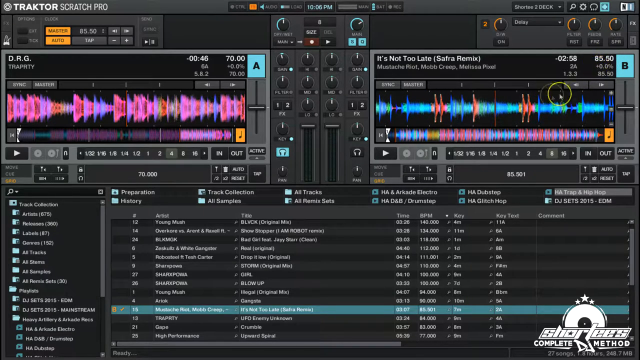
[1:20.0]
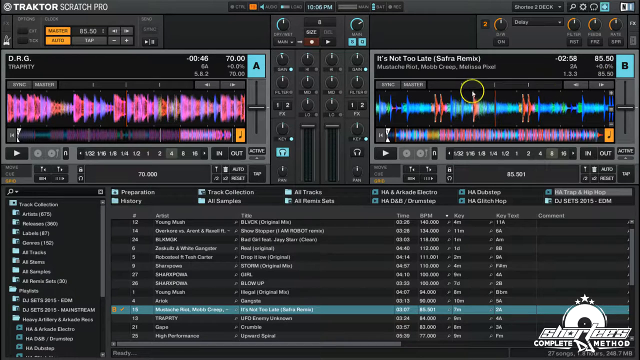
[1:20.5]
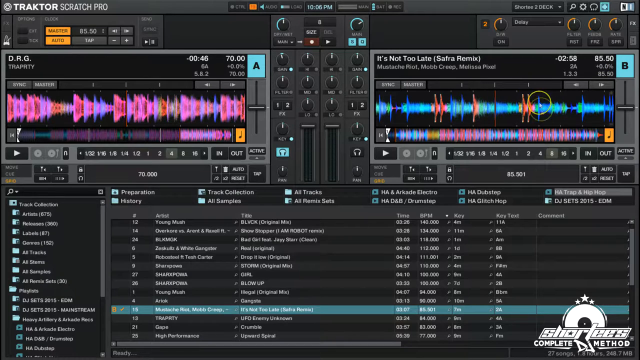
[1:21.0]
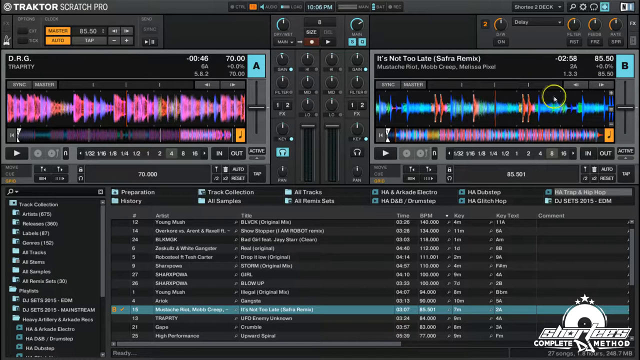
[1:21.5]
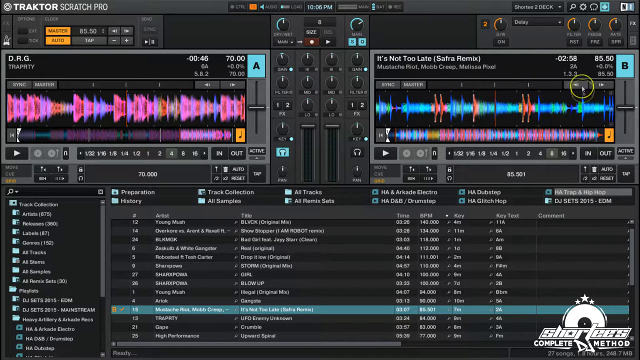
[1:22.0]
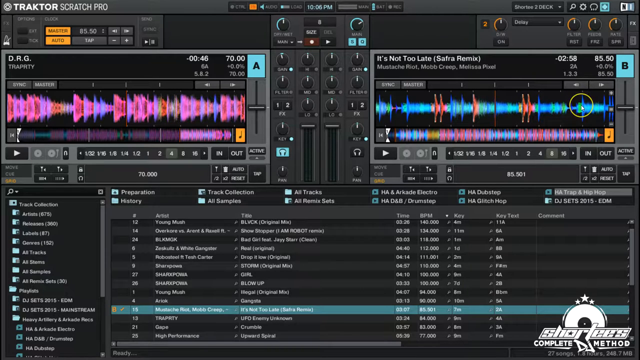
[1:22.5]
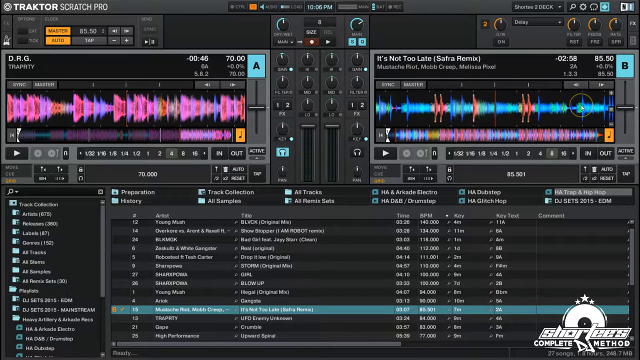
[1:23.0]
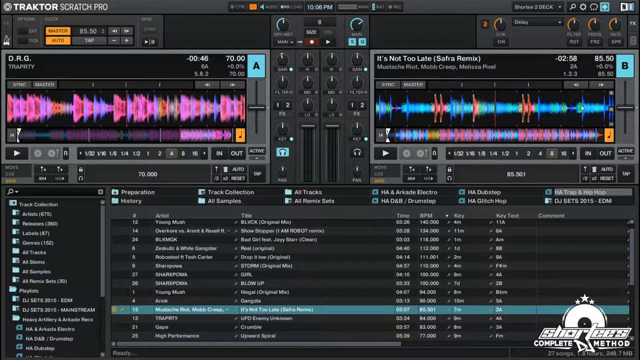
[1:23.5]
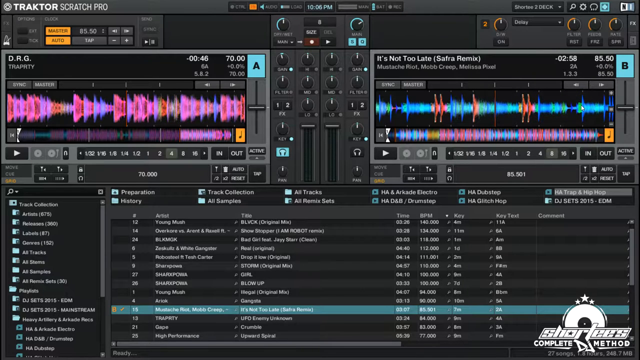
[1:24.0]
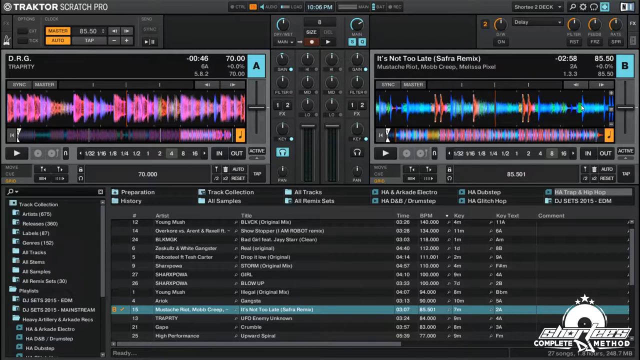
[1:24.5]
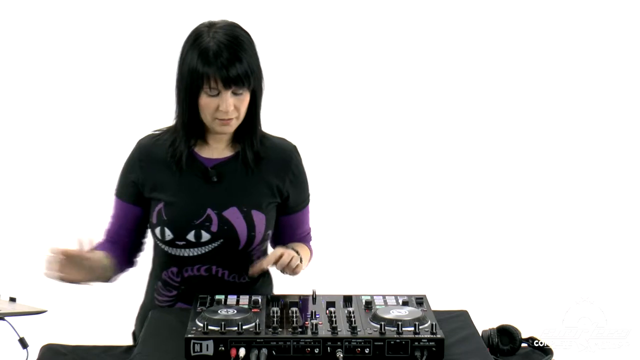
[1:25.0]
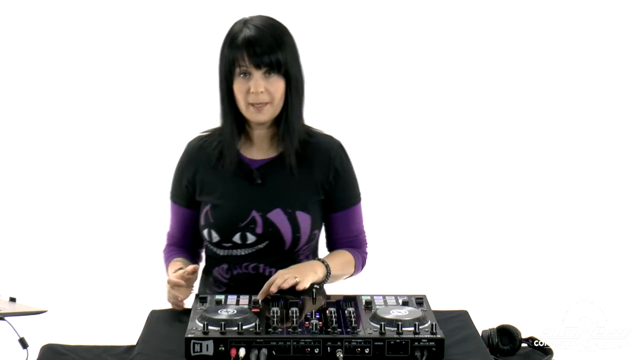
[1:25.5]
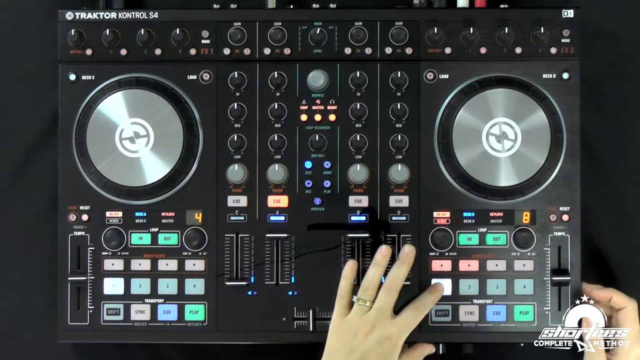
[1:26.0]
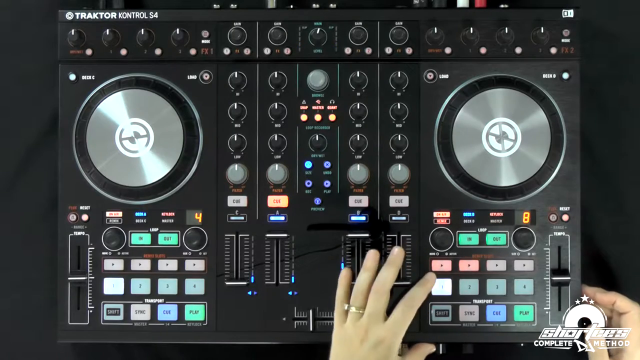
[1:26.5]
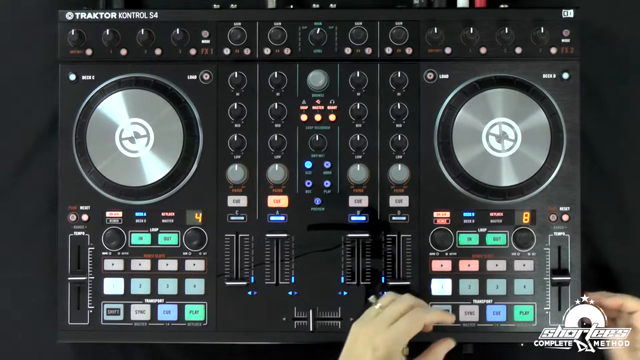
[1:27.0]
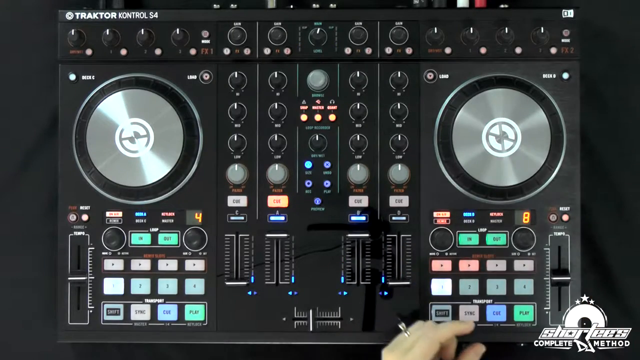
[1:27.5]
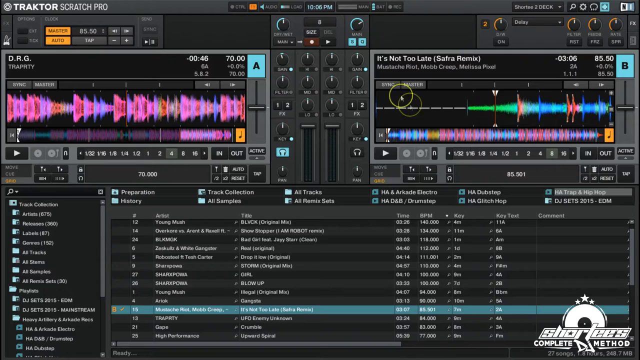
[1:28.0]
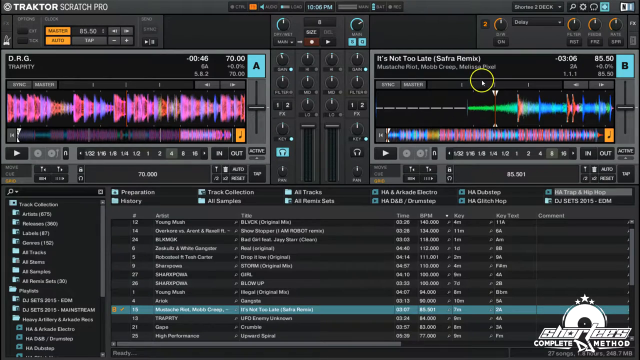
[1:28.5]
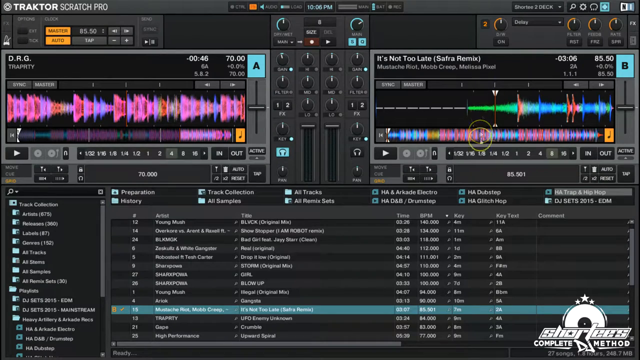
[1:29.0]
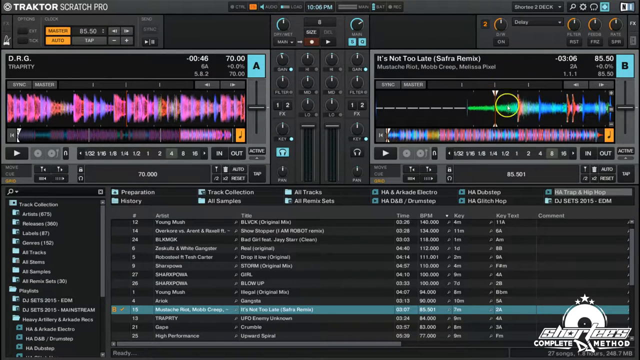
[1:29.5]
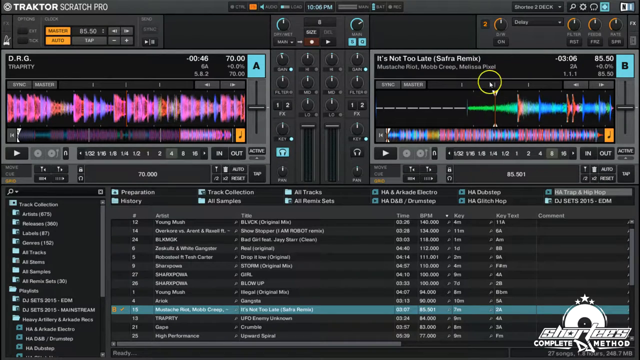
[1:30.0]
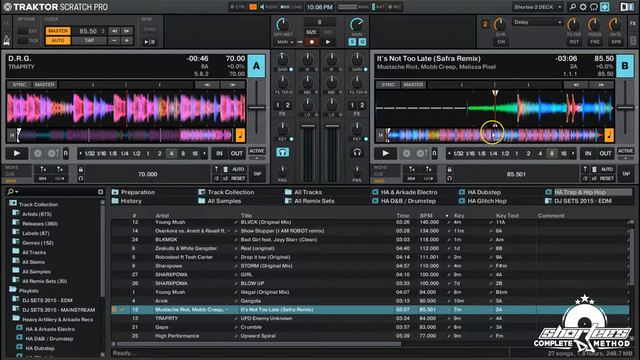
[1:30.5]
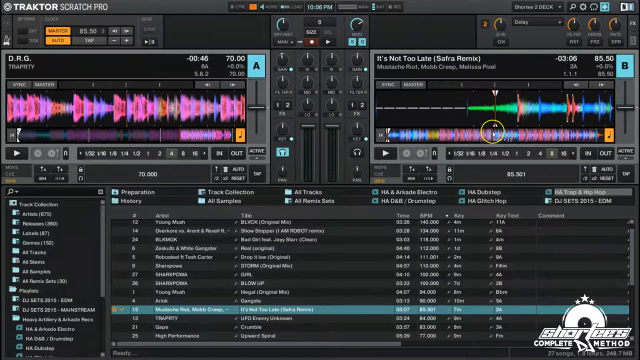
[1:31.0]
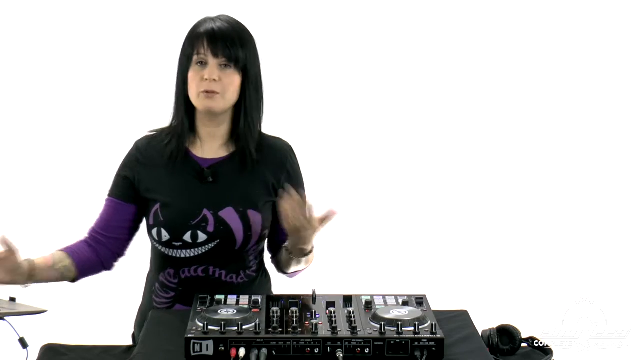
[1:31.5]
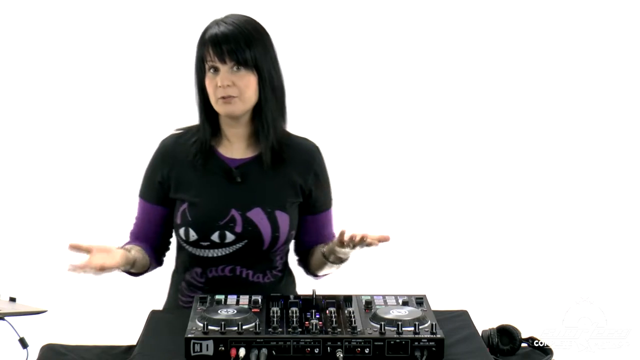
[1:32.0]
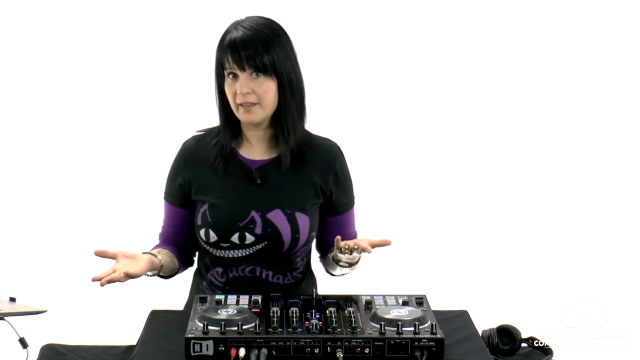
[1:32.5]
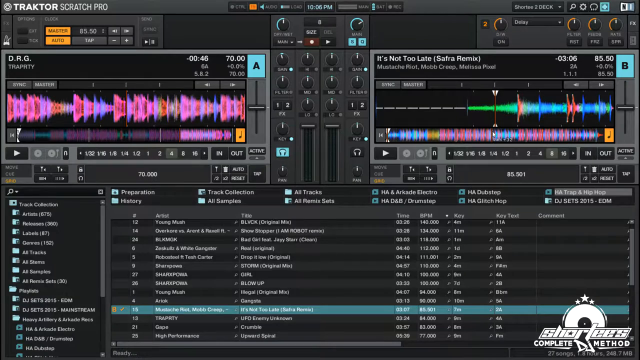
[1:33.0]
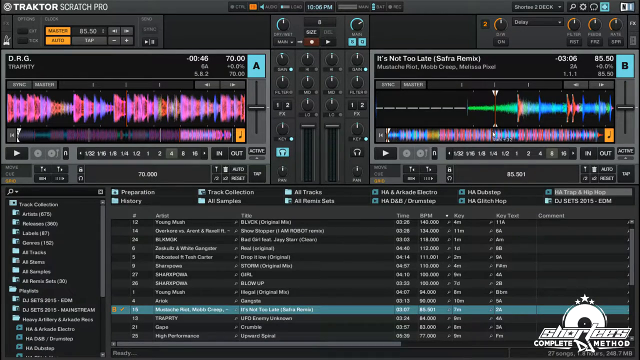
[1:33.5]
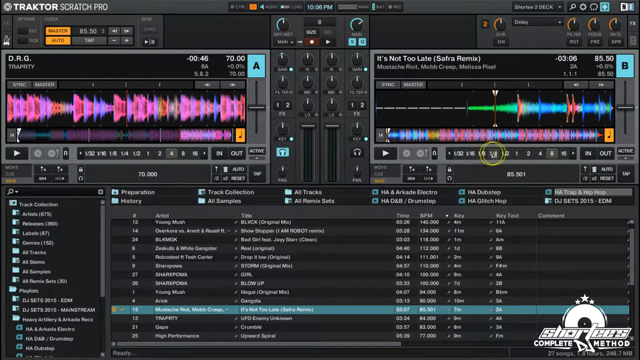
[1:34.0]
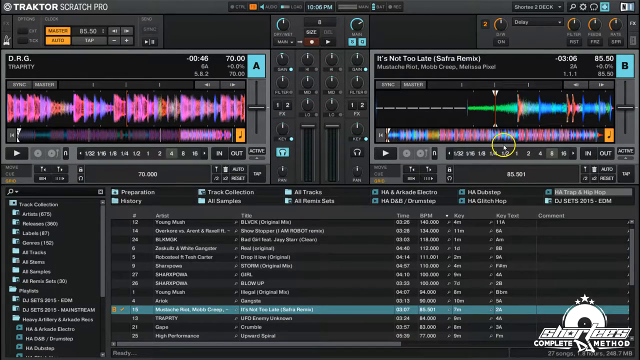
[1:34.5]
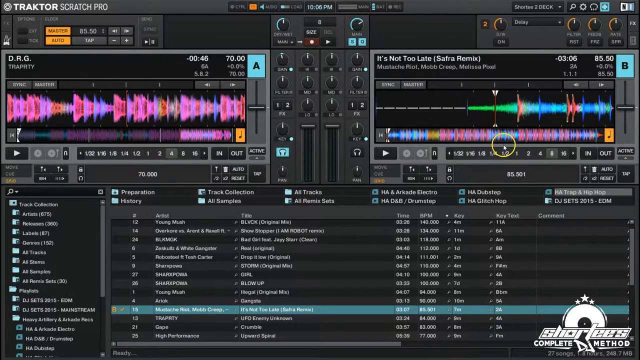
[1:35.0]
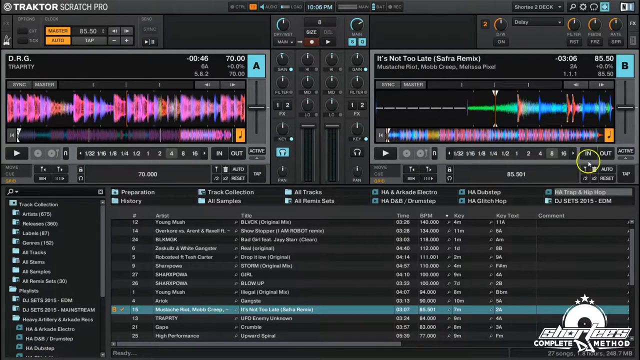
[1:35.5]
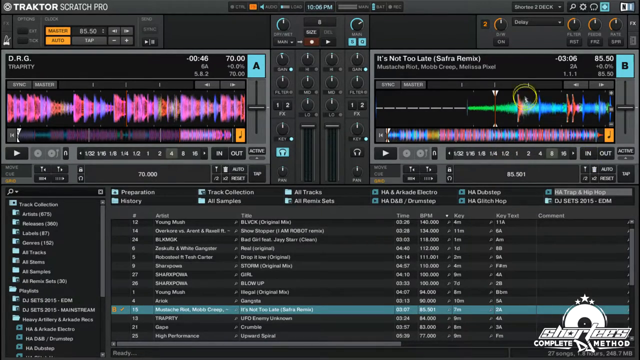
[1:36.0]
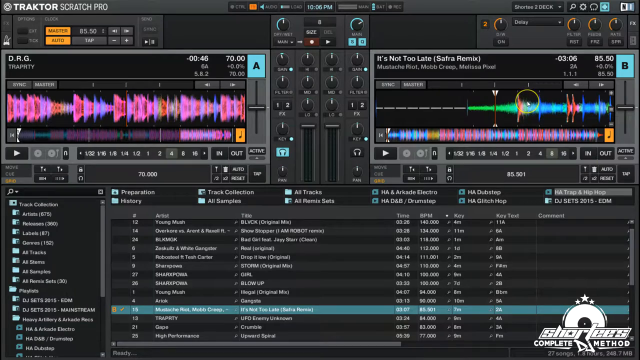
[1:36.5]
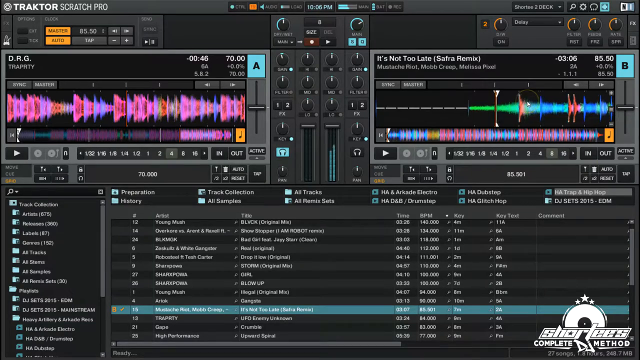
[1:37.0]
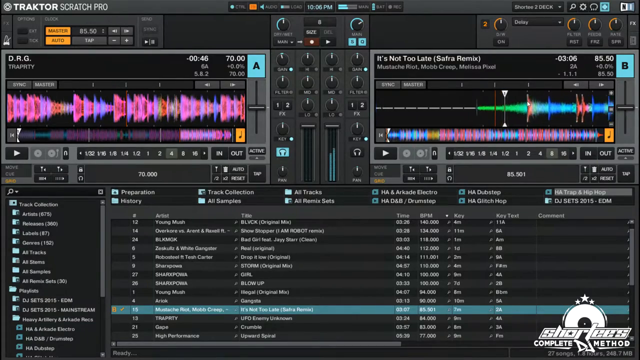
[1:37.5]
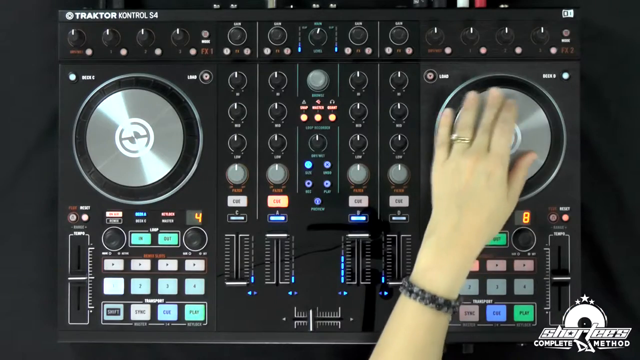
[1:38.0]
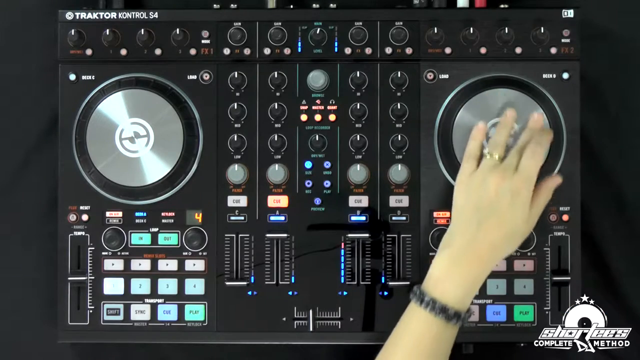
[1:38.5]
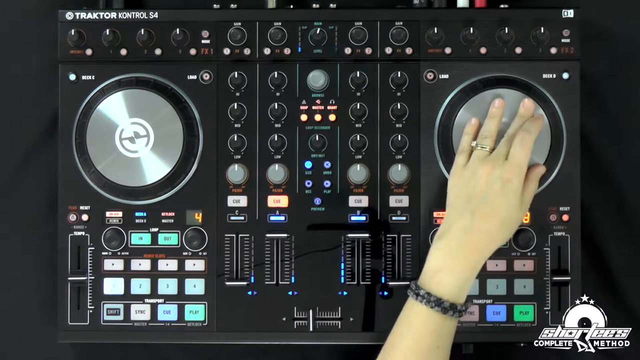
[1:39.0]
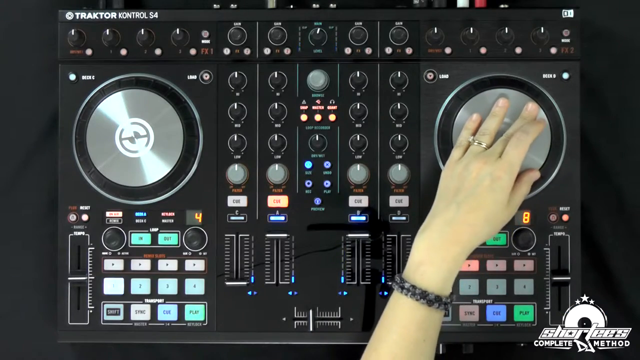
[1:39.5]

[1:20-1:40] The up-close view of the "Traktor Scratch Pro" digital synthesizer or mixing board continues; some of the smaller writing is not legible. In the middle are the words "preparation," "history," "track collection," "all samples," "all tracks," "all remix sets," "Arcade Electra," "drum stop," "dub stop," "glitch hop" and "DJ sets." Two boxes are just above those words, and the one on the left says "DRG."